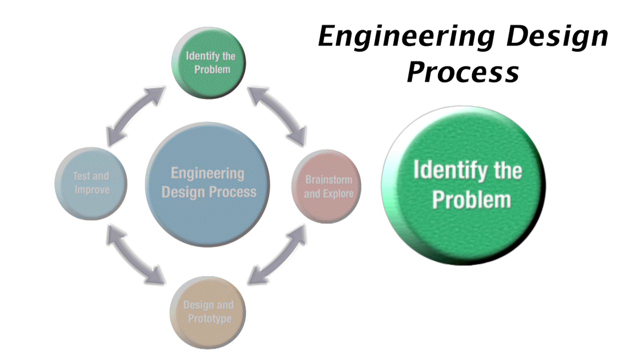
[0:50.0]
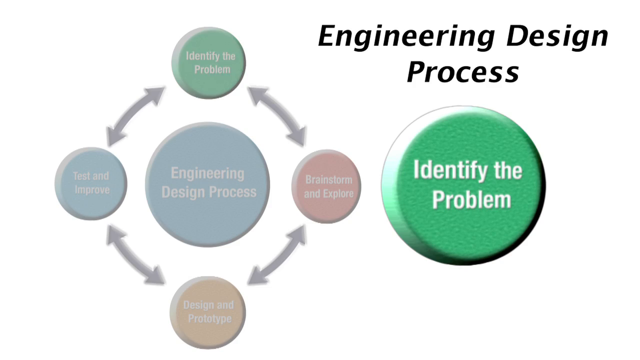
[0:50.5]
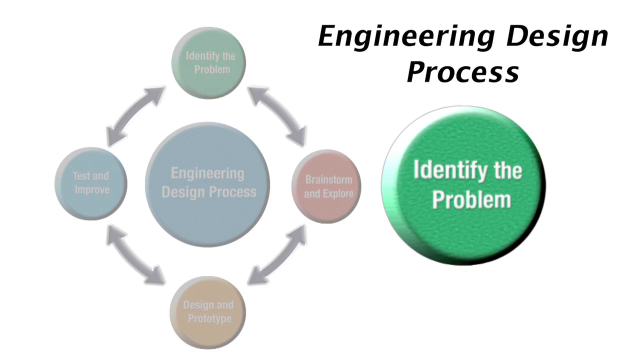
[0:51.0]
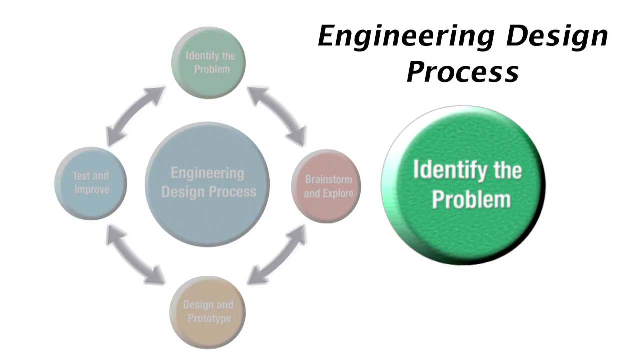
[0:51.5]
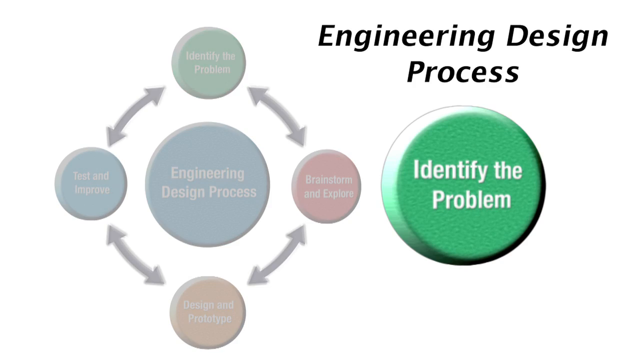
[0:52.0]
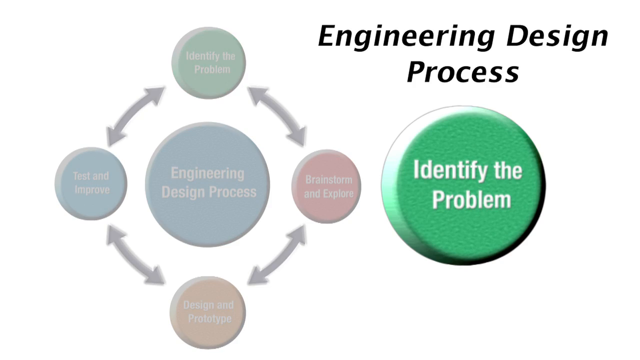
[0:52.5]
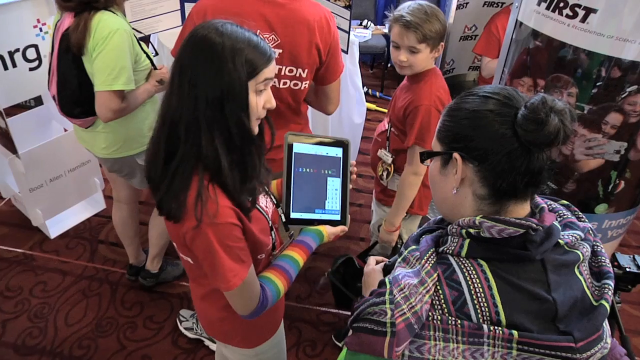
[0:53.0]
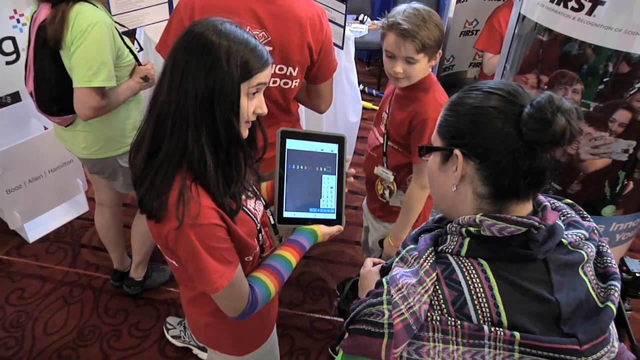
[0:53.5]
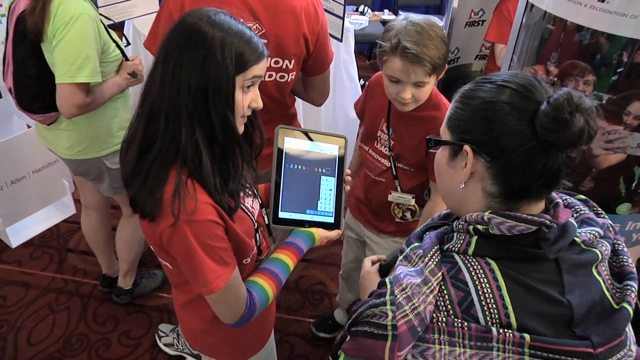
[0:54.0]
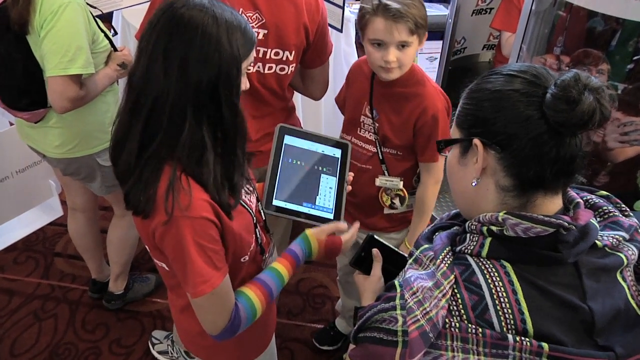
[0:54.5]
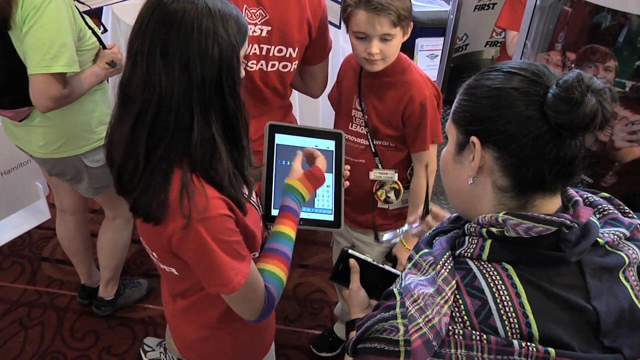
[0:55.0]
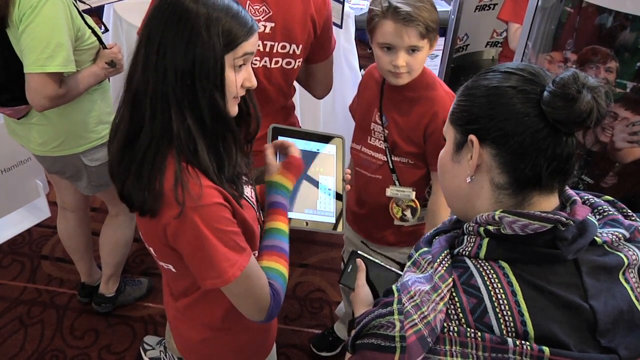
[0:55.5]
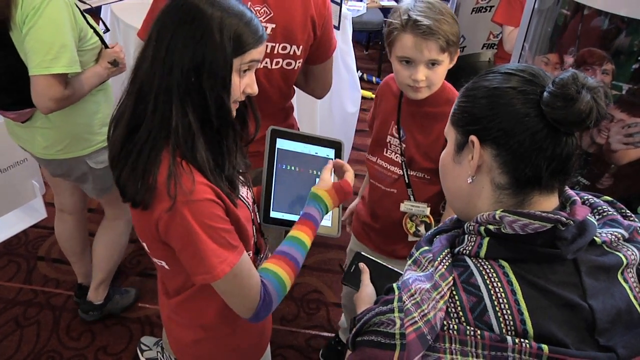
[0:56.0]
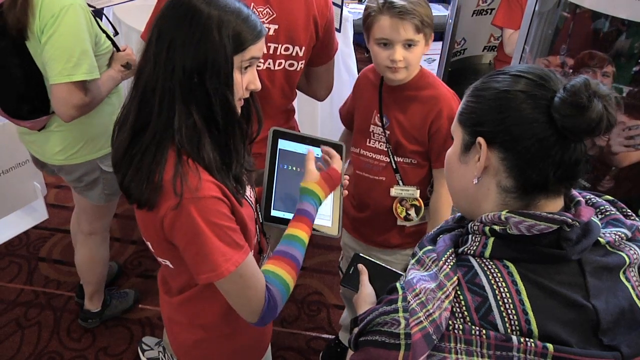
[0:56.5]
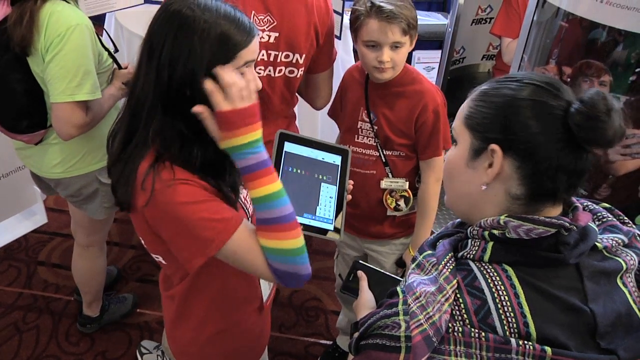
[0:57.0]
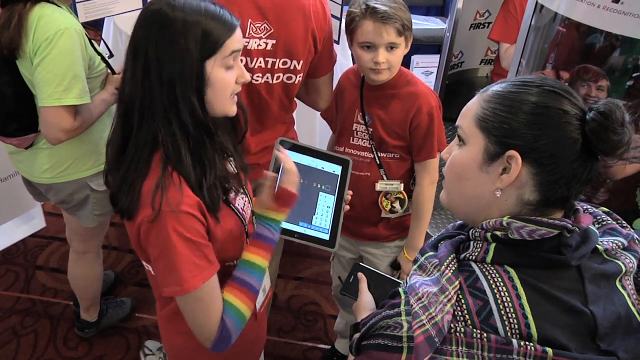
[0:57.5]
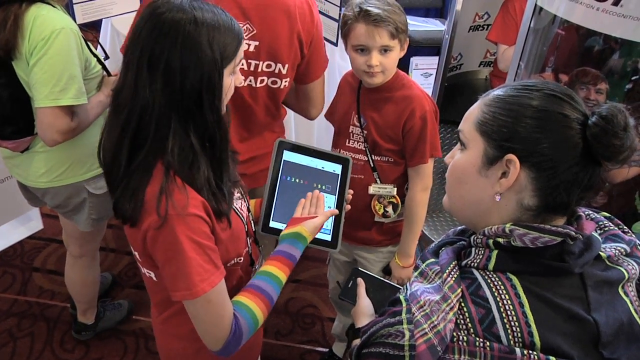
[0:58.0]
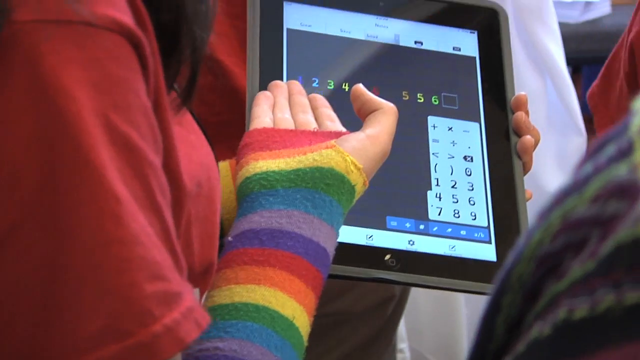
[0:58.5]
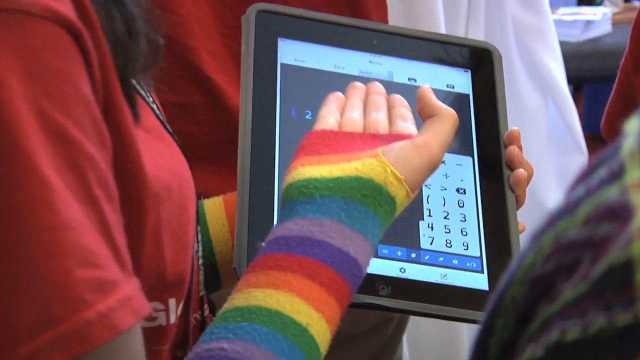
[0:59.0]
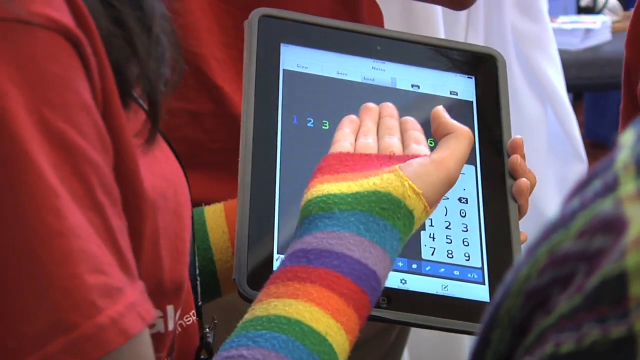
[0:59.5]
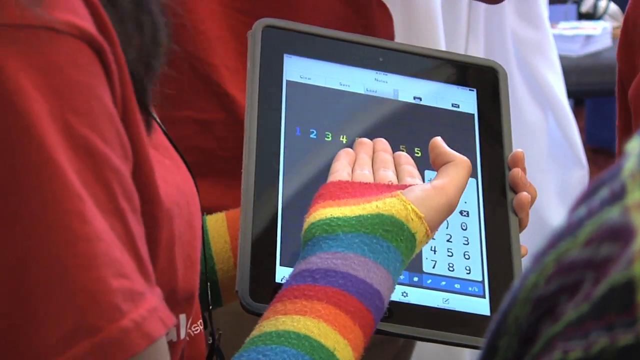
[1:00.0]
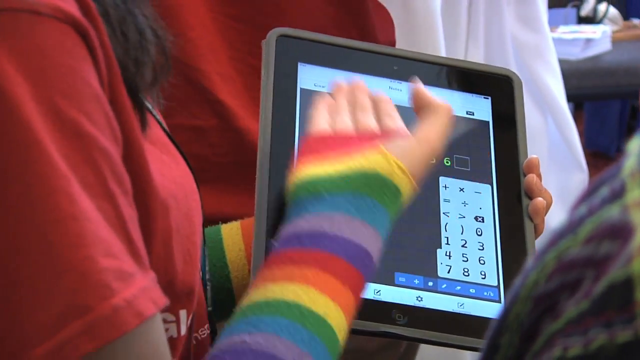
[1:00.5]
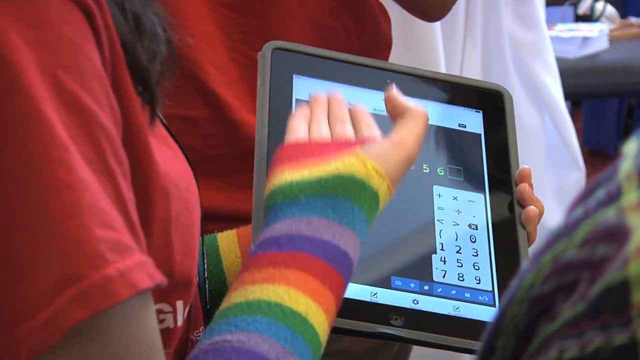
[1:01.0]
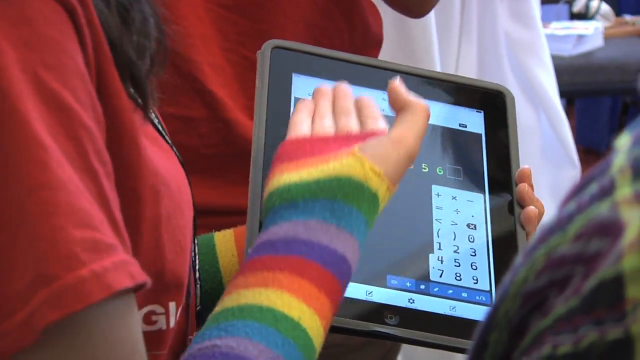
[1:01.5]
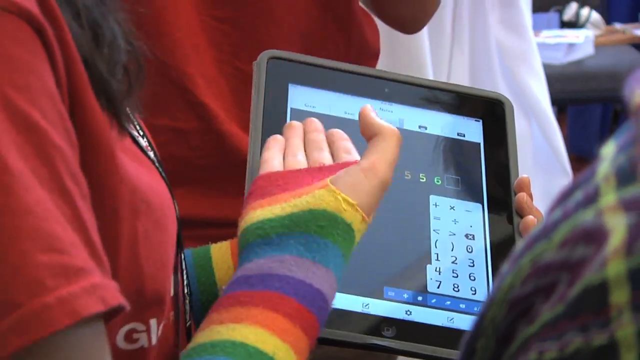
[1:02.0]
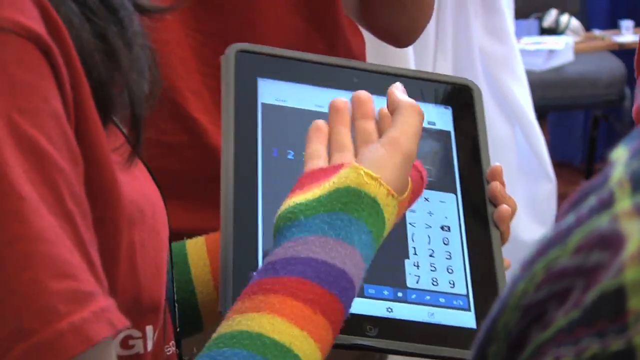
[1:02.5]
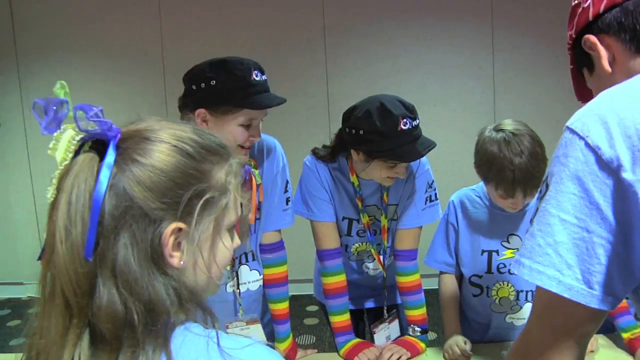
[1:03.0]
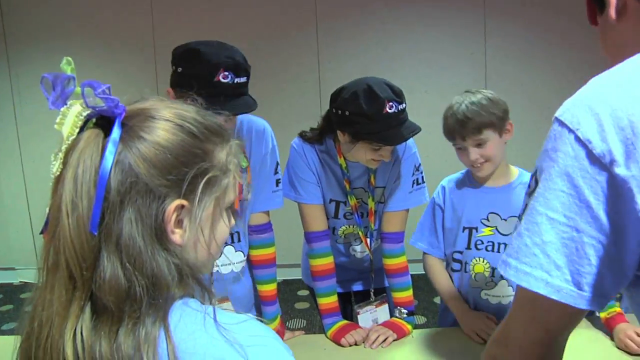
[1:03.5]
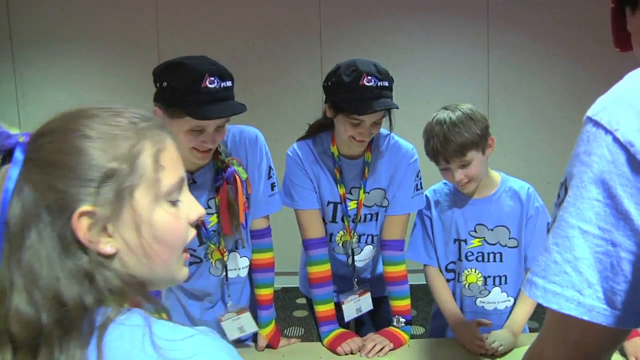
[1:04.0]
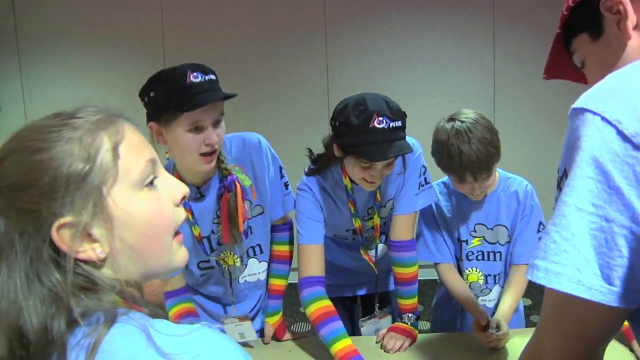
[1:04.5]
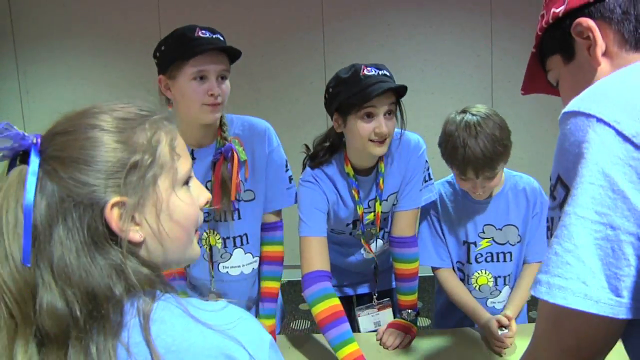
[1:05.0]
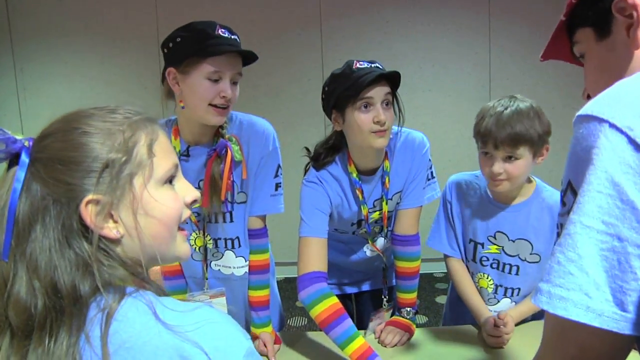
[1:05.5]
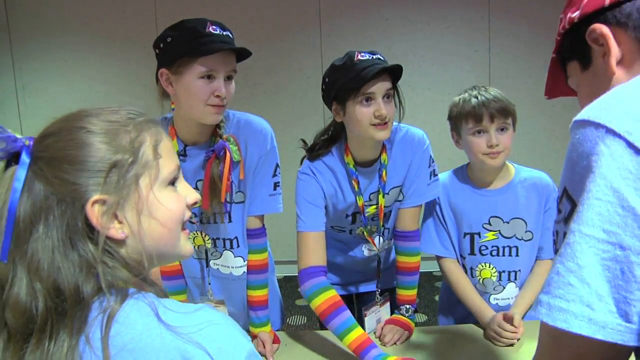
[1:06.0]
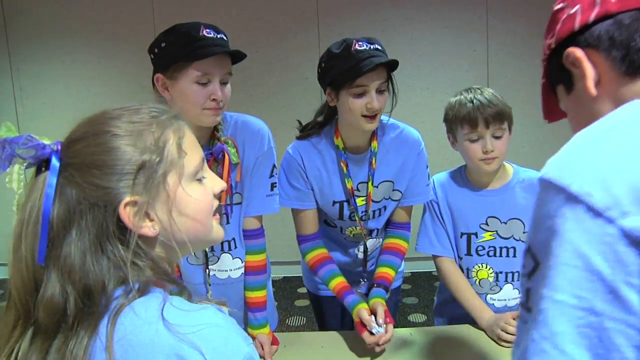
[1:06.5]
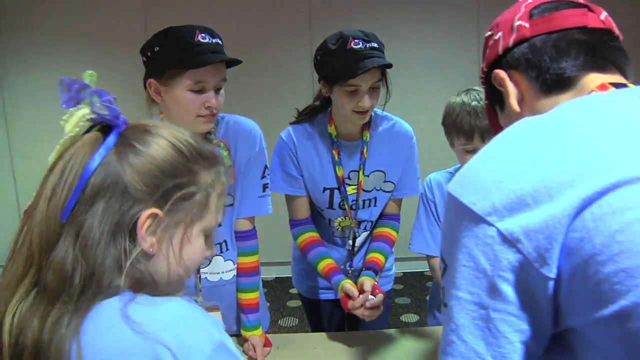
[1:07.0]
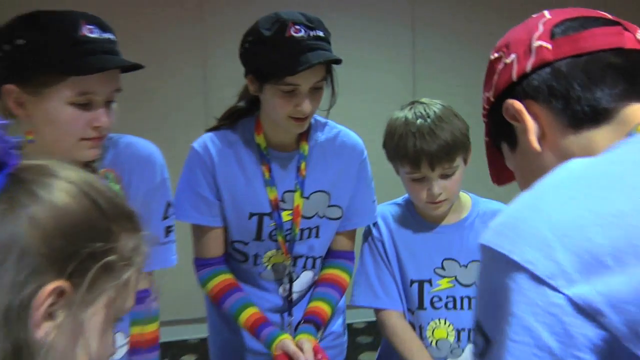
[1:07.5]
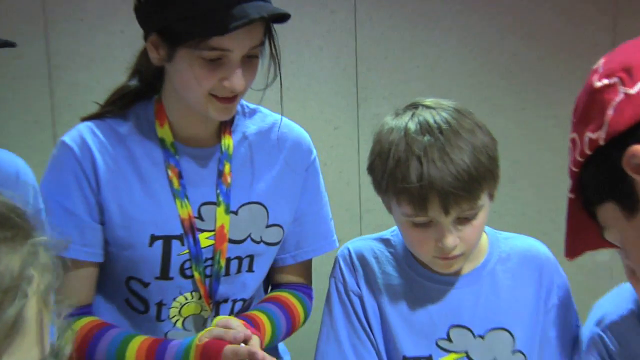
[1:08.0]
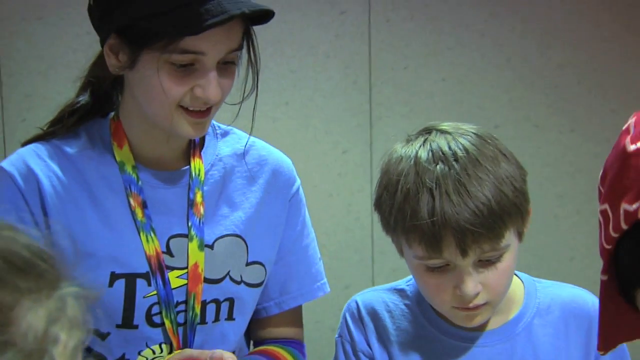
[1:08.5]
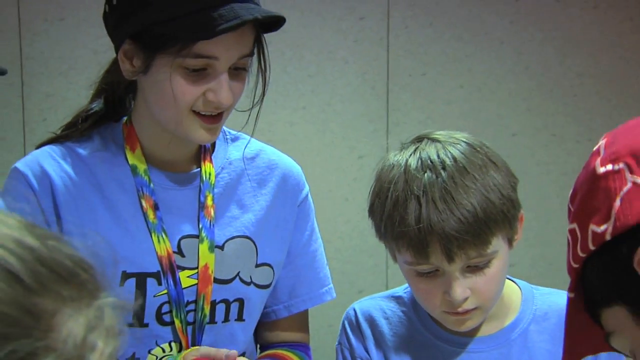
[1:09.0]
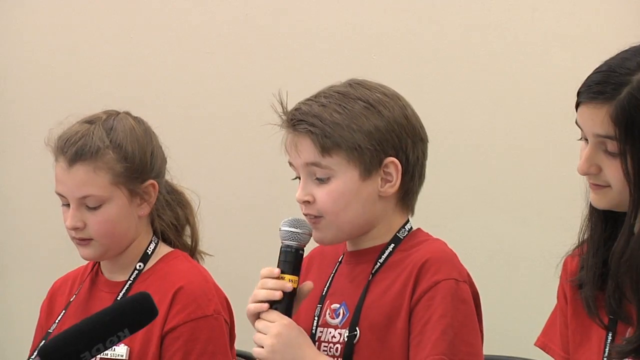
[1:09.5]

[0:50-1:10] An image titled engineering design process shows four bubbles going either way around a central engineering design process bubble, and to the right it says "identify the problem." Everything grays out, and the video goes to a close-up of a young girl identifying a problem for an older woman as she walks it through on a tablet. The girl wears a rainbow-colored sleeve that covers the palm of her hand, with just a thumb hole. Most of the girl students at this meeting also wear similar rainbow arm sleeves and light purple shirts, and many have dyed hair or a rainbow-colored ribbon around their neck. The video makes one last change to a scene of a young man giving a speech.